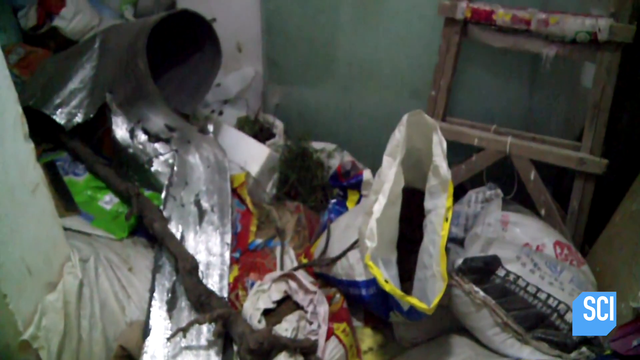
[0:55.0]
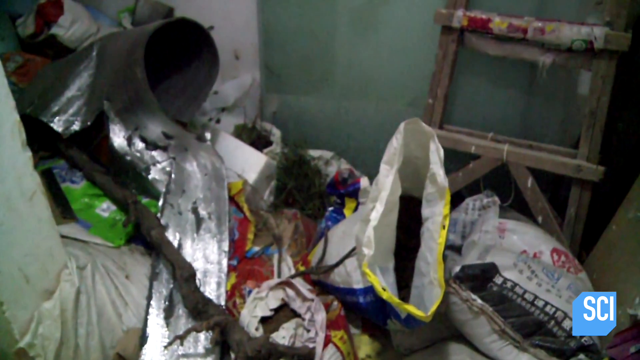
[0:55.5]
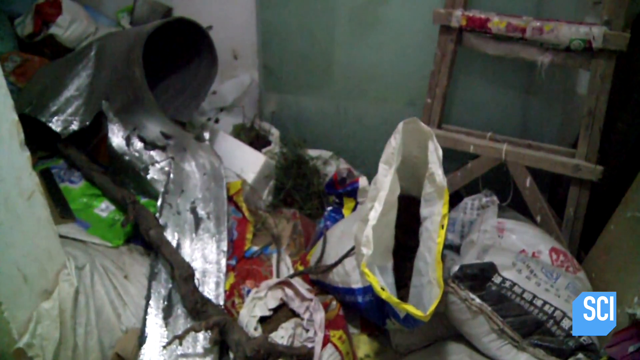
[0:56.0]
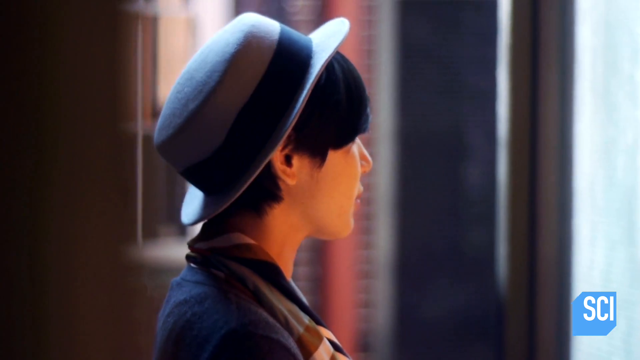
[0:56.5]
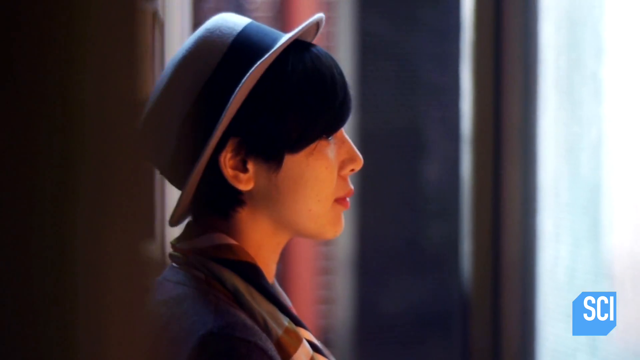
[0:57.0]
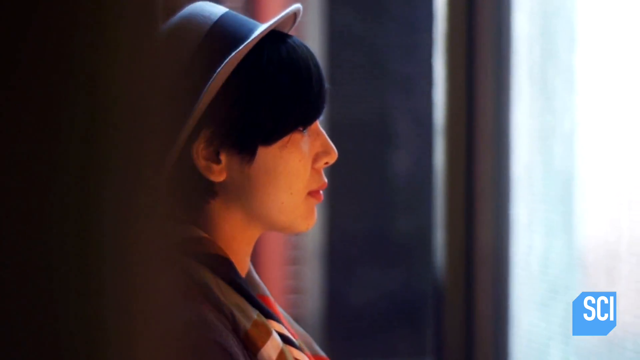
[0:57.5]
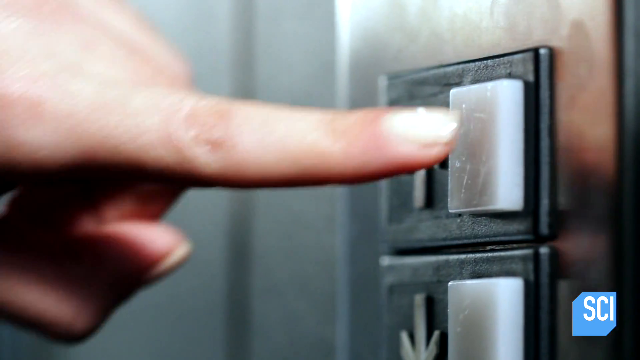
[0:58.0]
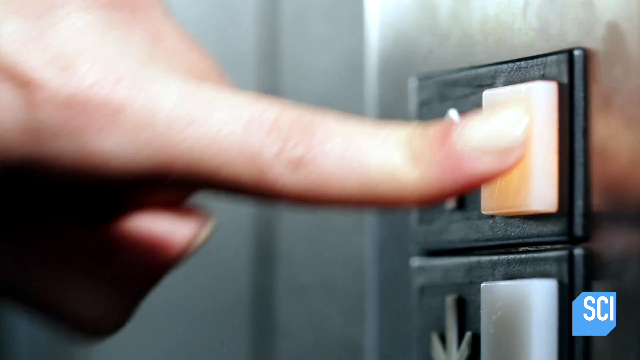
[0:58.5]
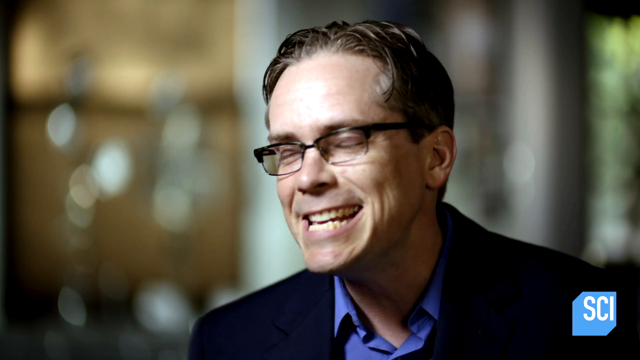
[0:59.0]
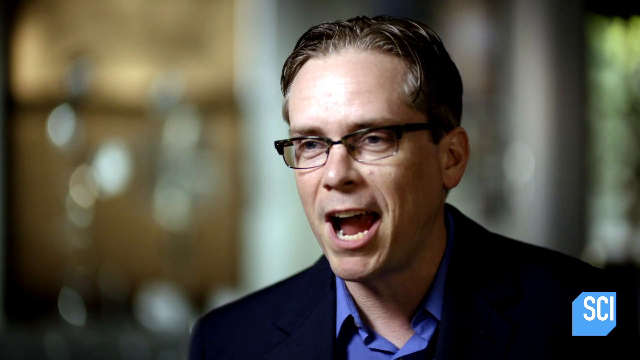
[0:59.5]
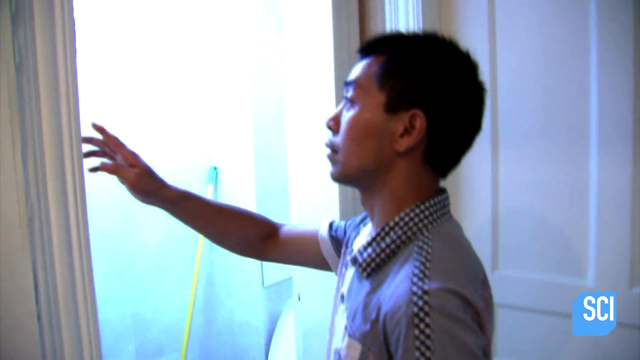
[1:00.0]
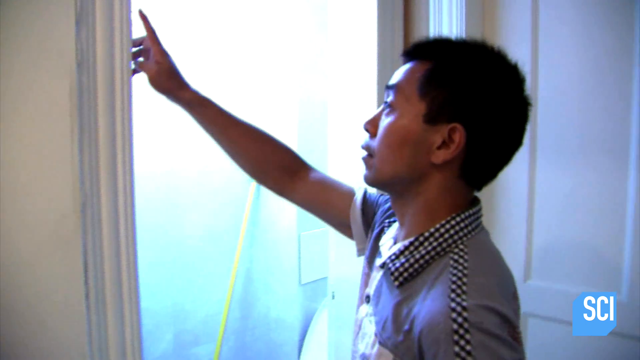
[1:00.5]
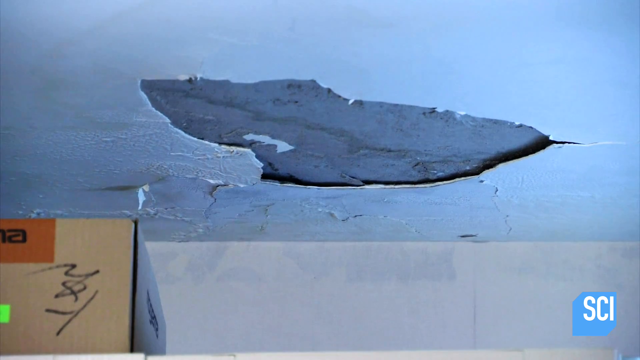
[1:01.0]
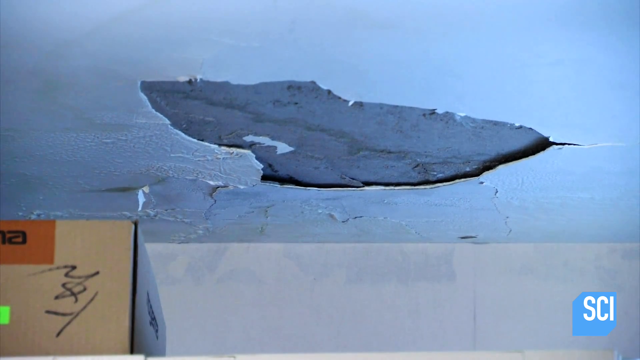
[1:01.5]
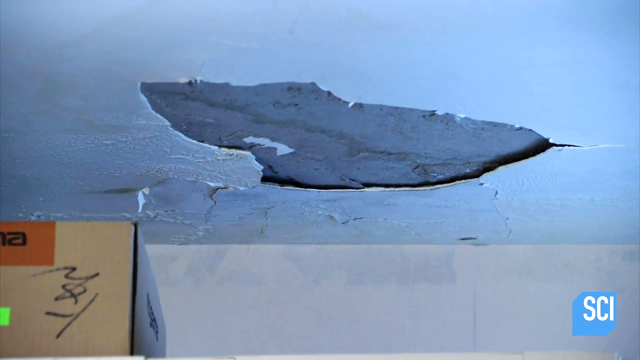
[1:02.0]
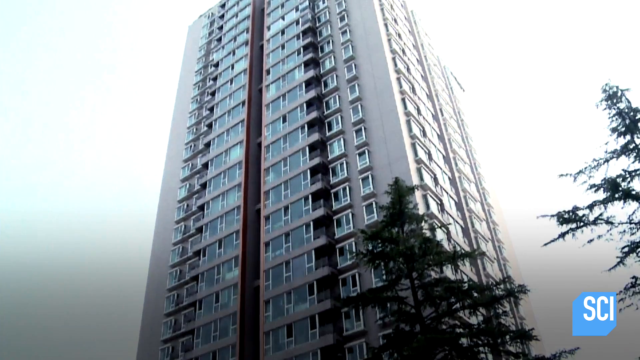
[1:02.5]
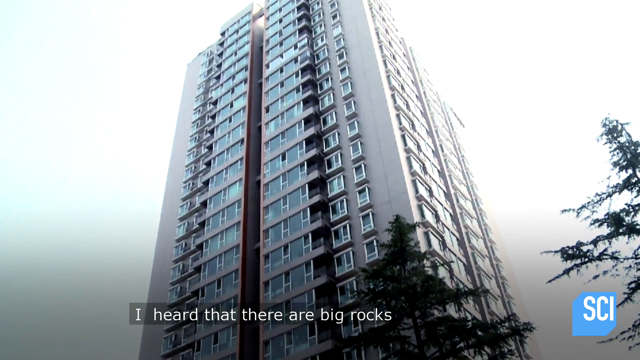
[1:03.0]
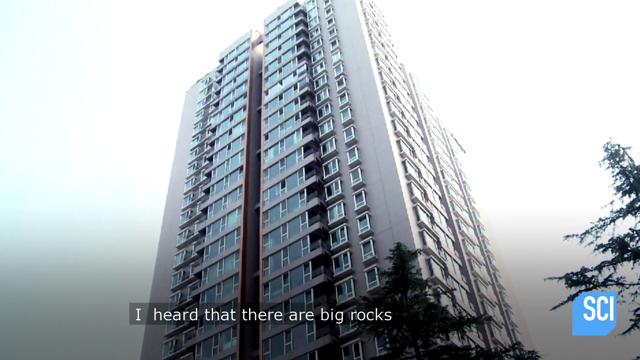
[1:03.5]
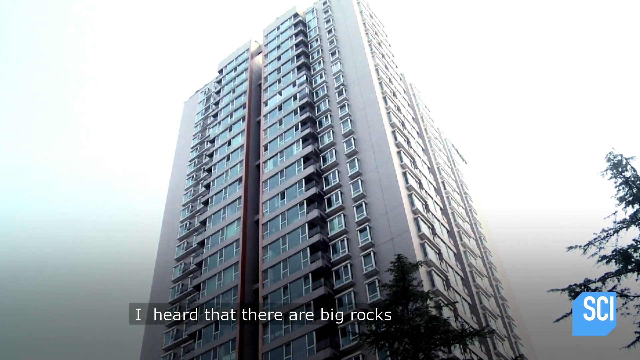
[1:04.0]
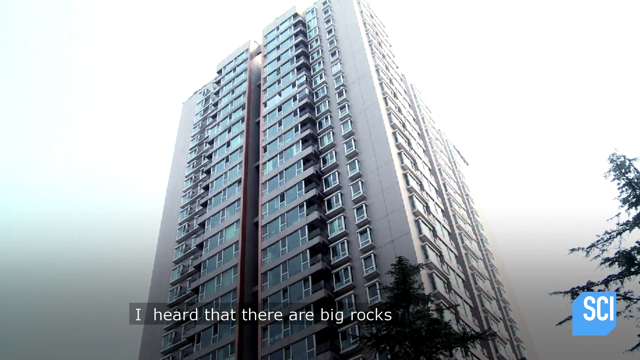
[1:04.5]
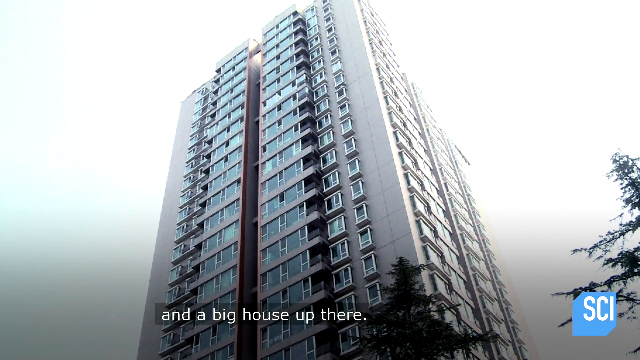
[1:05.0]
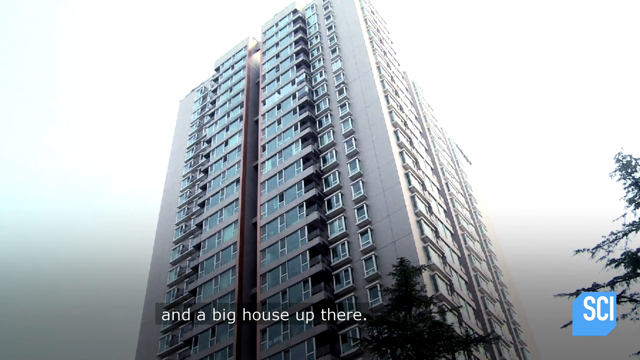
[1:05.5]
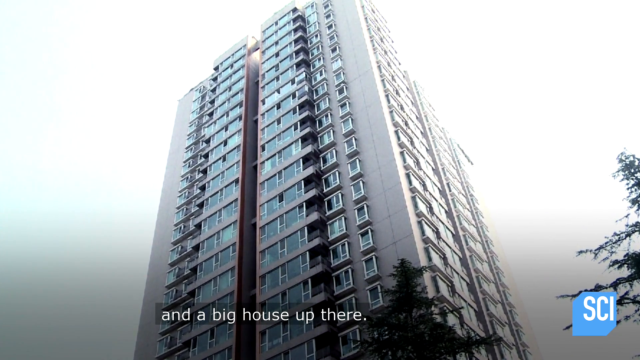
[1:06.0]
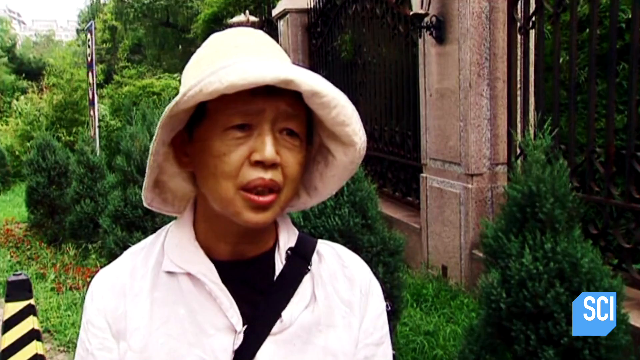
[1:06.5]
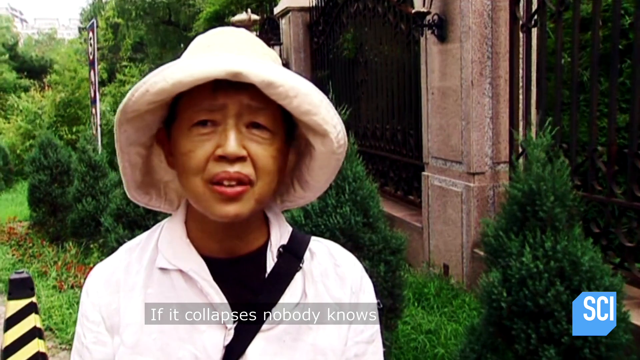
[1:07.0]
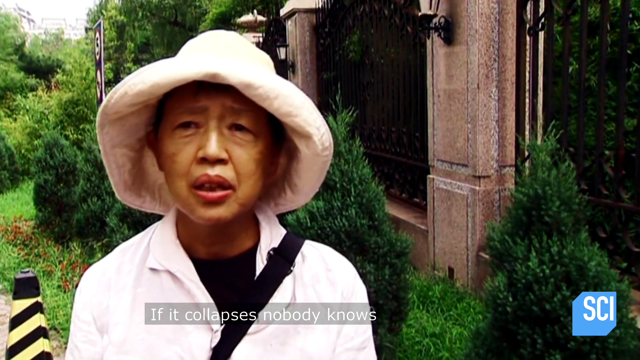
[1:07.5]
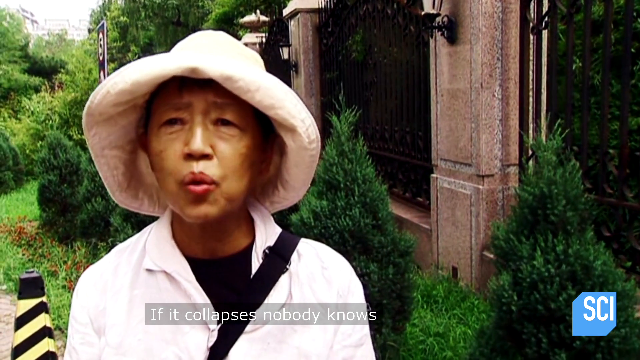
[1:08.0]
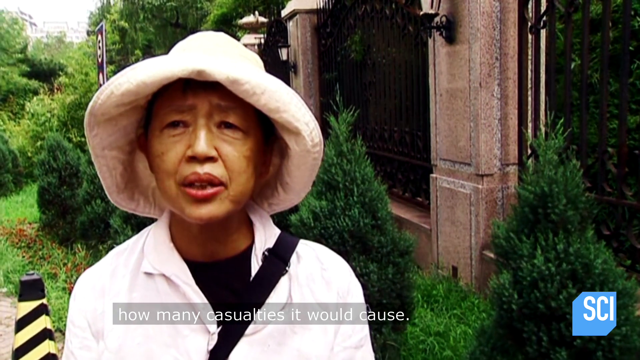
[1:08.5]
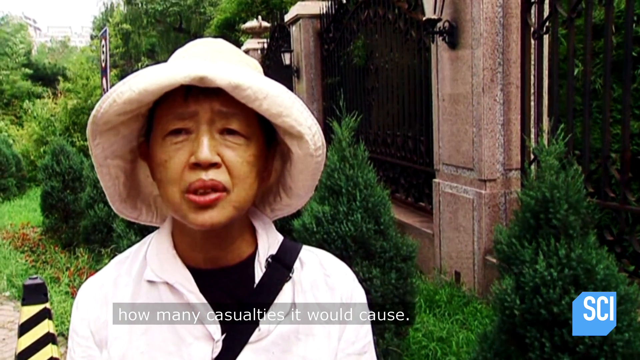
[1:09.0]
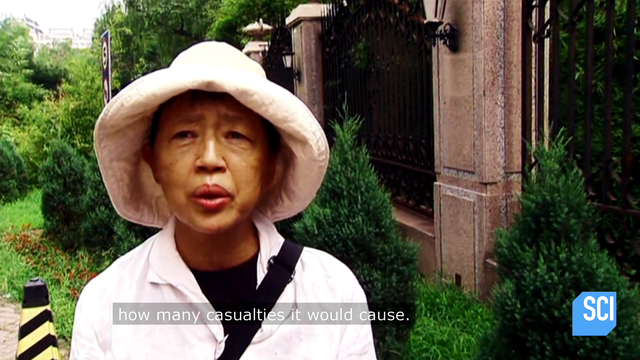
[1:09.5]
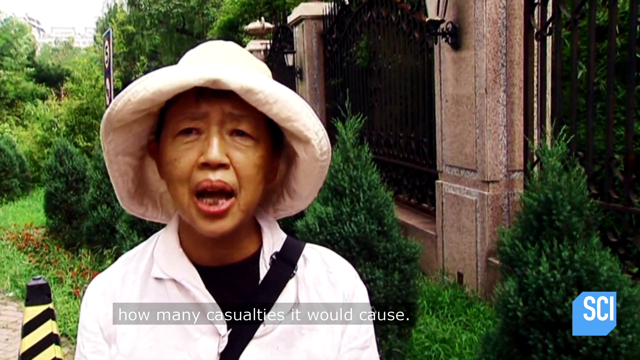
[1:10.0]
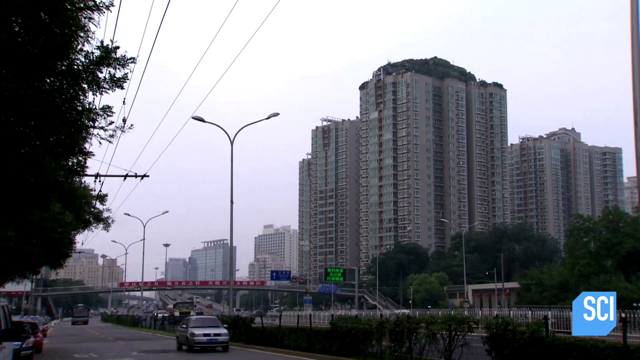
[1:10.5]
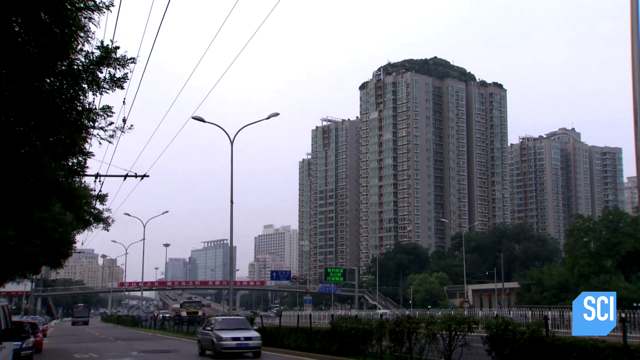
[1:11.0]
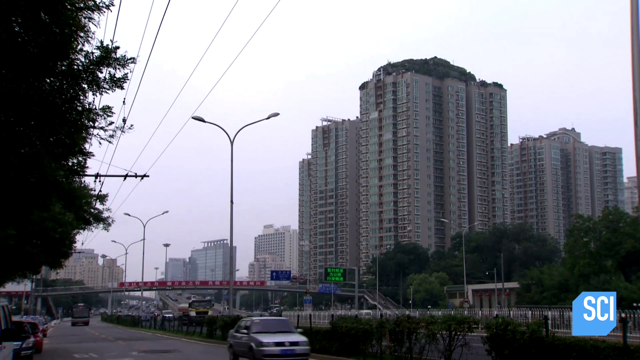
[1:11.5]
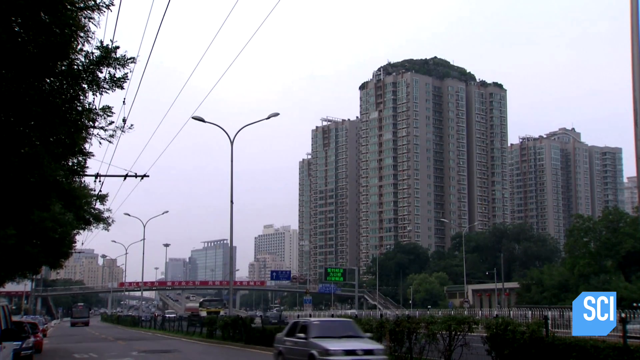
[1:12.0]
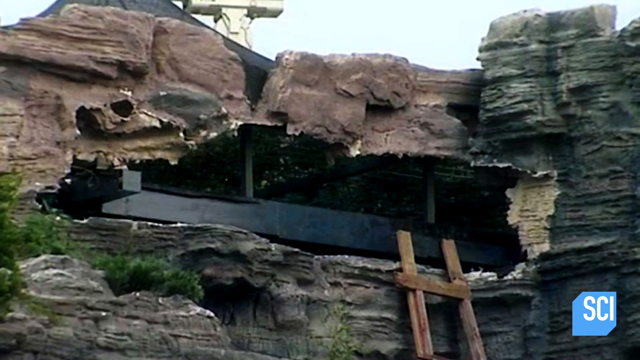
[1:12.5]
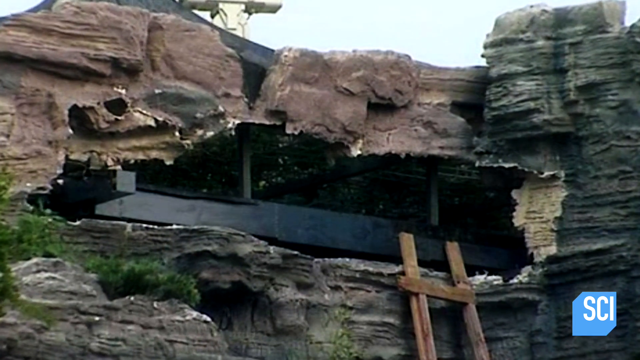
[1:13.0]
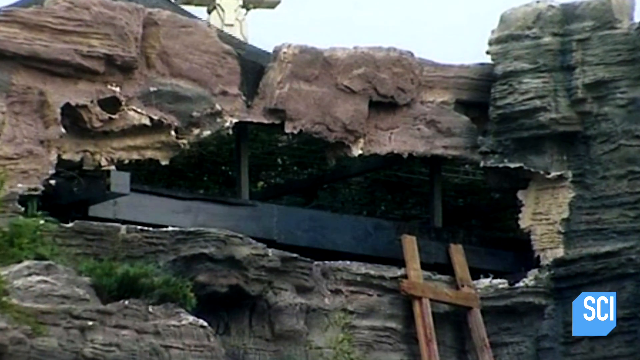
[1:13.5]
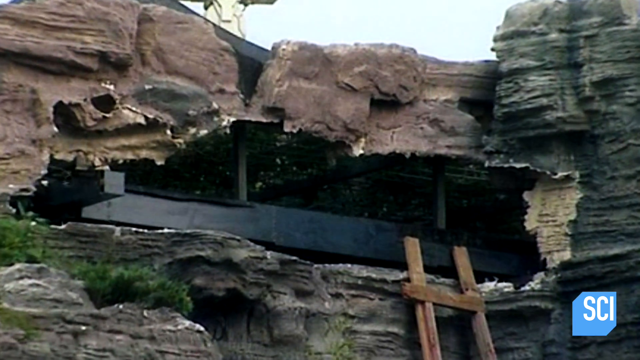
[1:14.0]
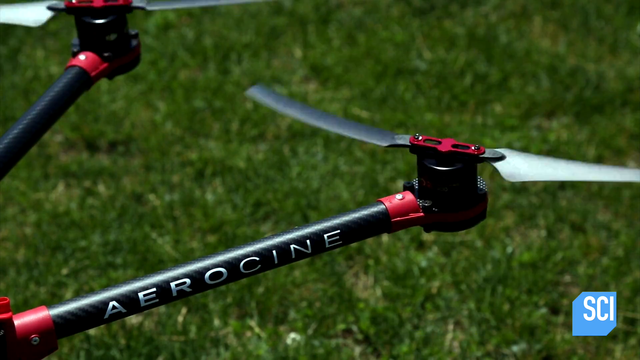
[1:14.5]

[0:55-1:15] A younger Chinese person in a hat and a dark blue coat reaches forward and pushes the up button of an elevator. The apartment complex appears in a close-up looking up and in a shot from a distance; from a distance the building appears to have a bit of a cap, almost like a green or gray rock cap. A woman standing in a garden is interviewed, with some red brickwork and greenery around her; she comments that they have heard there are big rocks and a garden up there. Another shot looks up from the base of the building, and another looks like a view of a cliff up on the building.